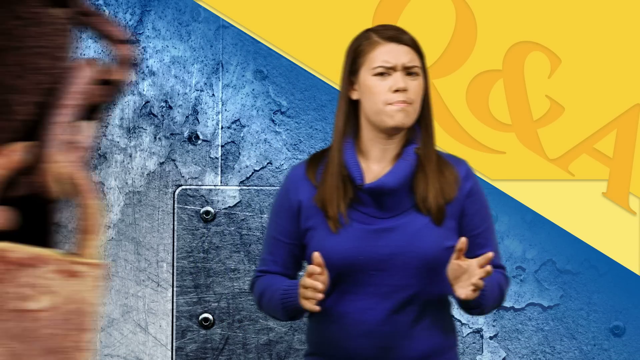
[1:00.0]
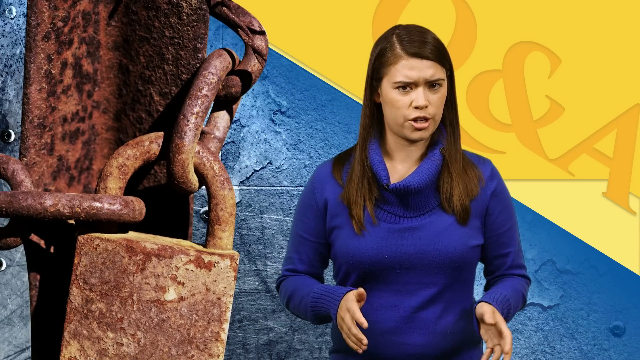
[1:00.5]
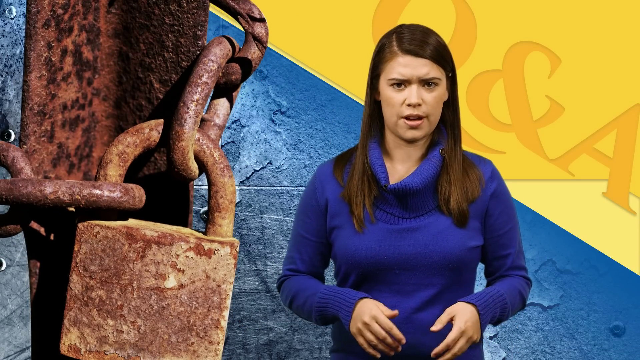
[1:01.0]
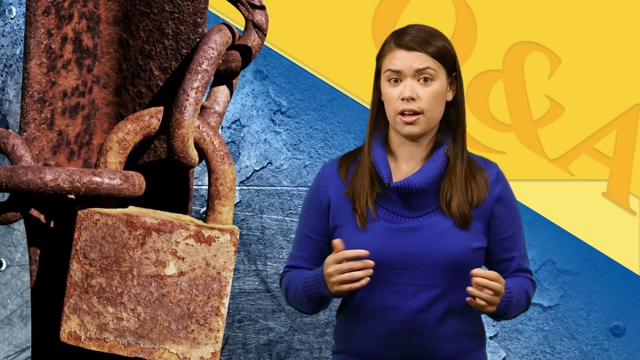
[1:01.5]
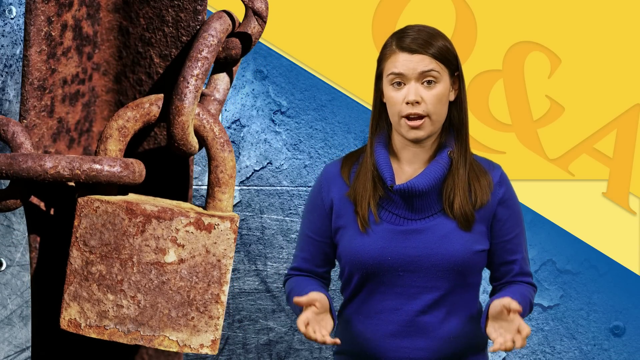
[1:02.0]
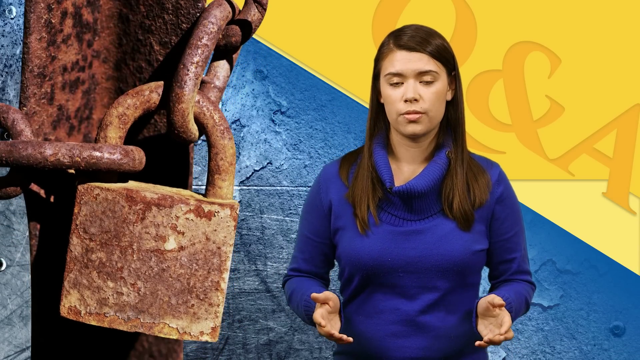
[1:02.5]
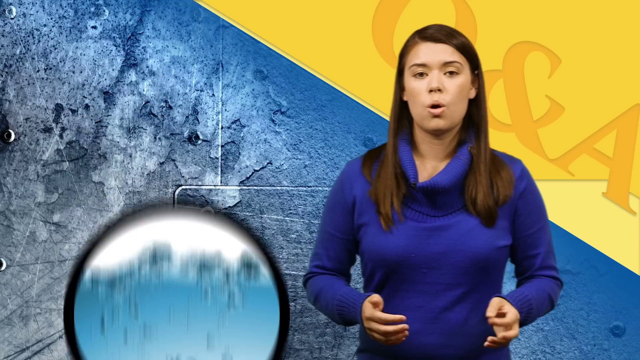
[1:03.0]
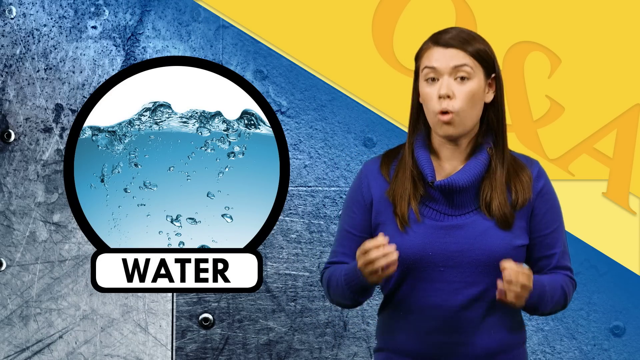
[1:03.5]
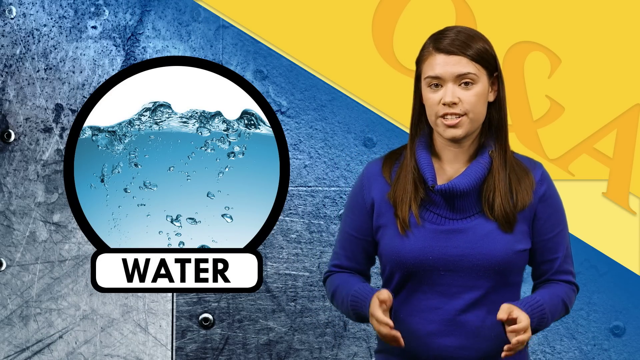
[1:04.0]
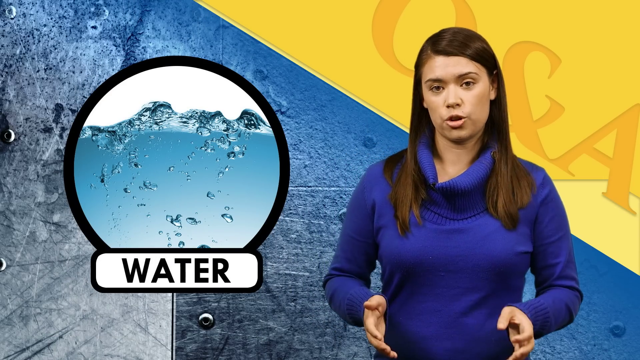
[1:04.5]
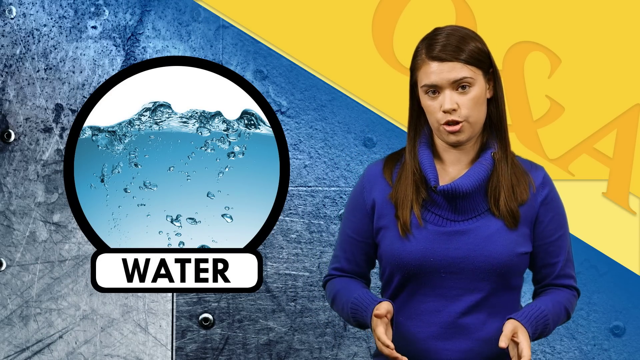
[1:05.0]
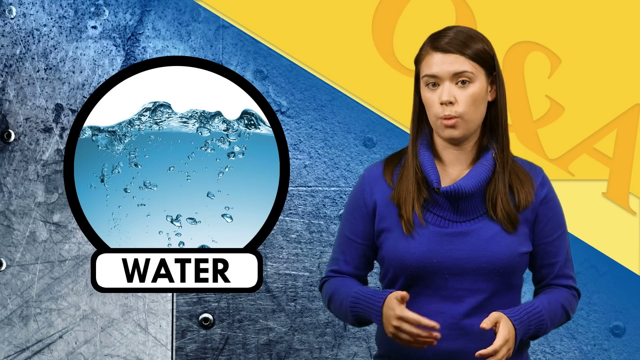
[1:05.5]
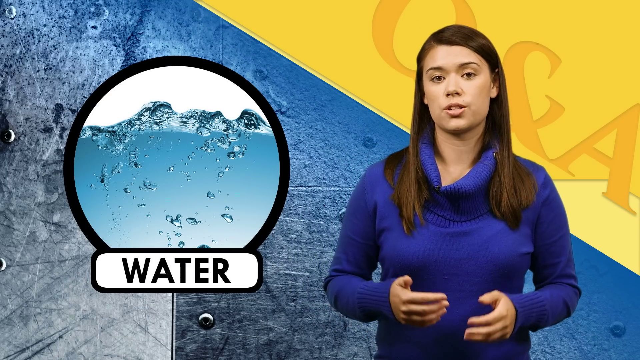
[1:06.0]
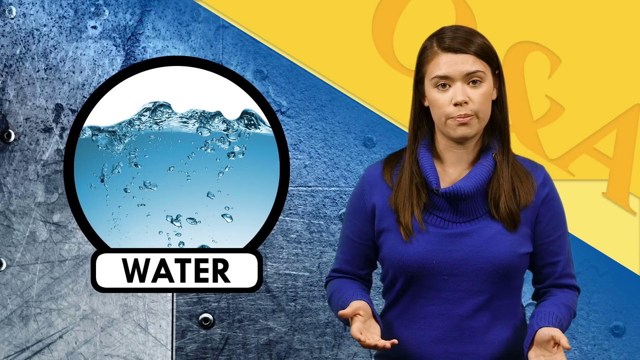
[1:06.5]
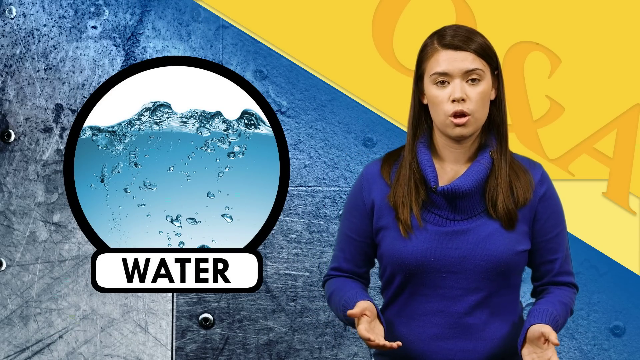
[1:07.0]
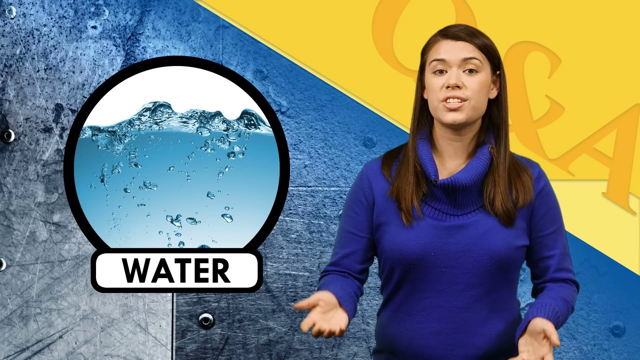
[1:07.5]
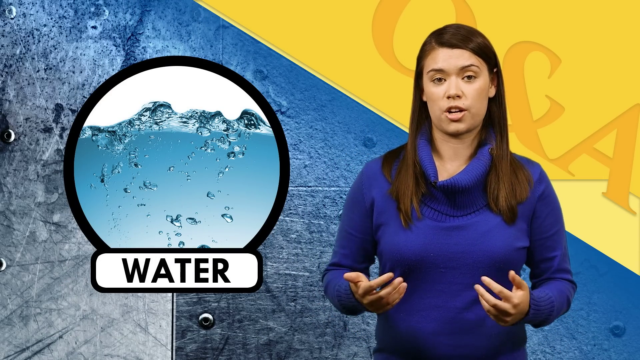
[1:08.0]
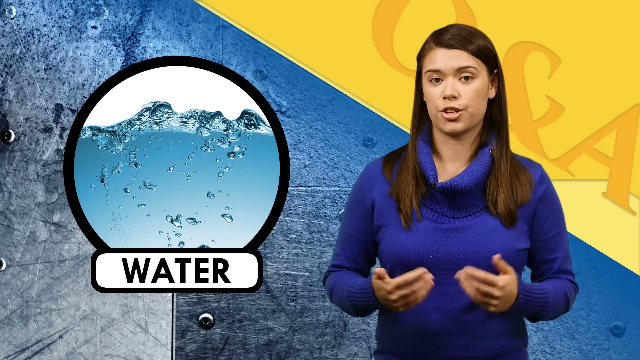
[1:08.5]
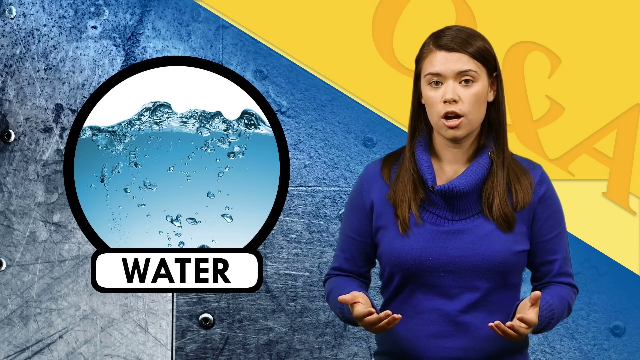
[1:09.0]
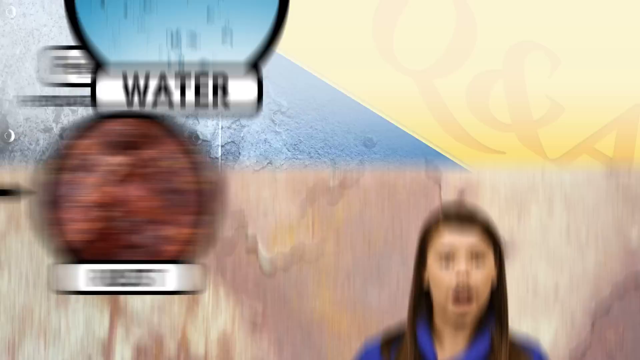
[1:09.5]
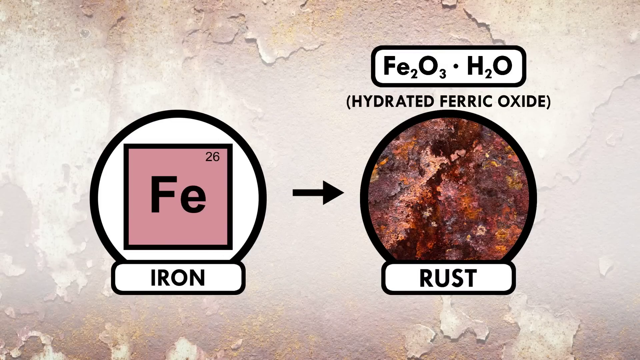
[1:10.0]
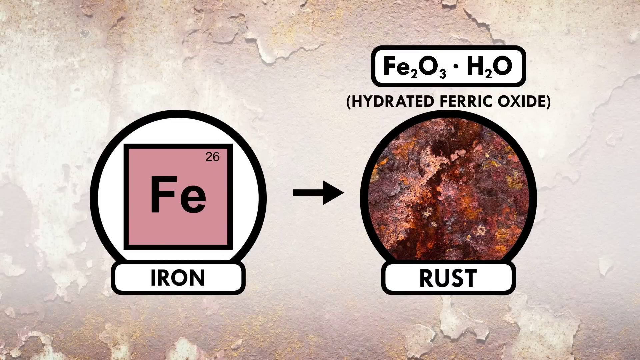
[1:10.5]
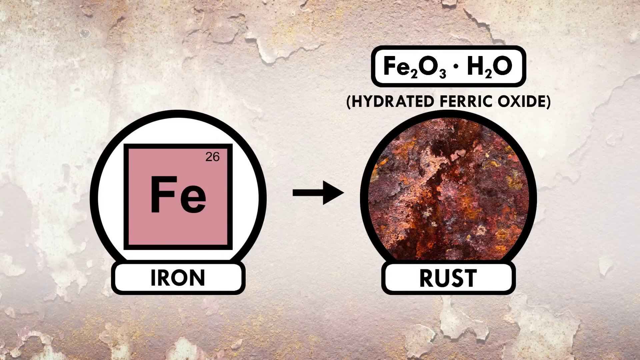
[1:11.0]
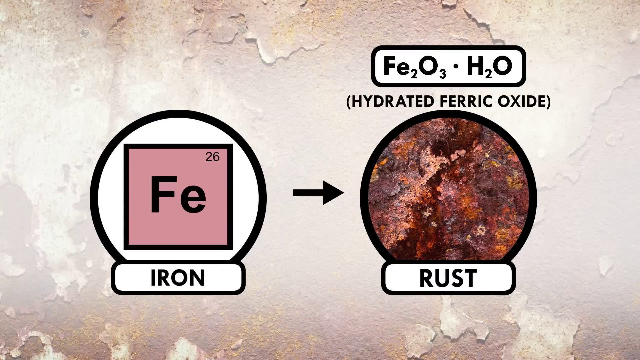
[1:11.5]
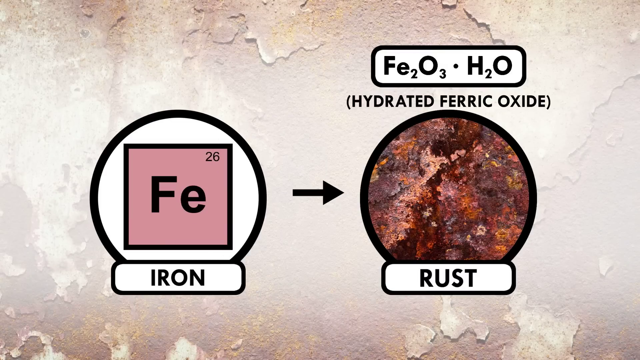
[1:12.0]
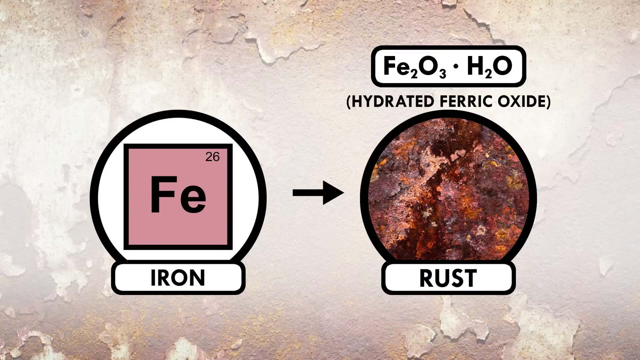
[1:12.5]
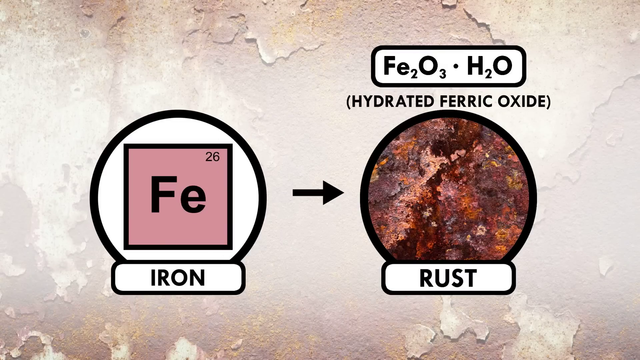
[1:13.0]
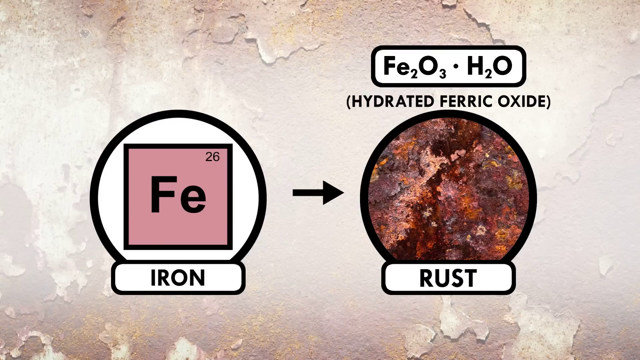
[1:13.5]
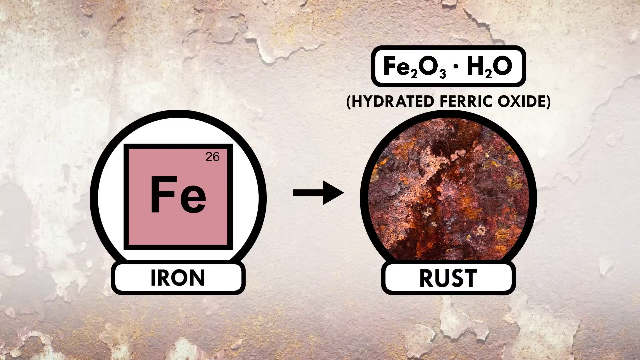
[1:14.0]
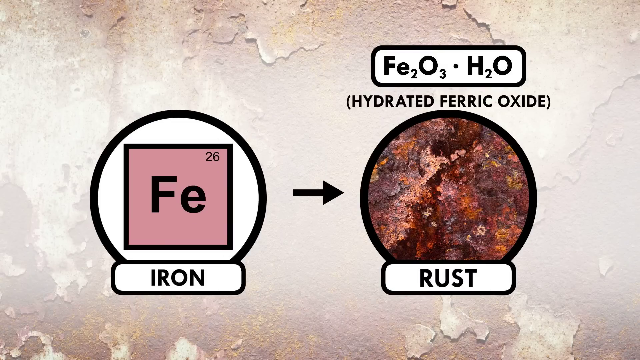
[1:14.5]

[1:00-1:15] Sophia appears, along with a rusted lock and a rusted chain. A picture of water in a circle, circled with a thick black line, has the word "water" under it. The chemical symbol for iron, "Fe", is in a circle with a pink background. An arrow points from iron towards a picture of rust, identified as hydrated ferric oxide. Sophia appears with the picture of water next to her. The background is blue and yellow, with the Q and A behind her, and there is a white wall behind. The graphic goes to iron and rust.